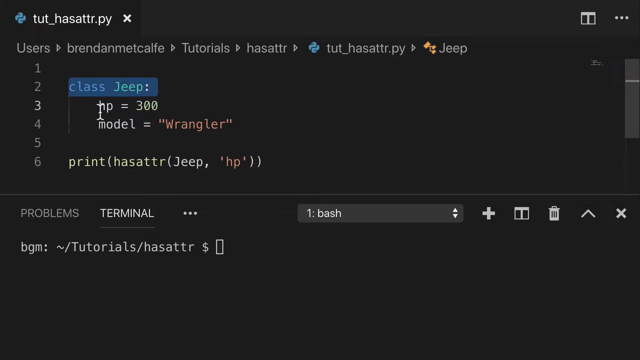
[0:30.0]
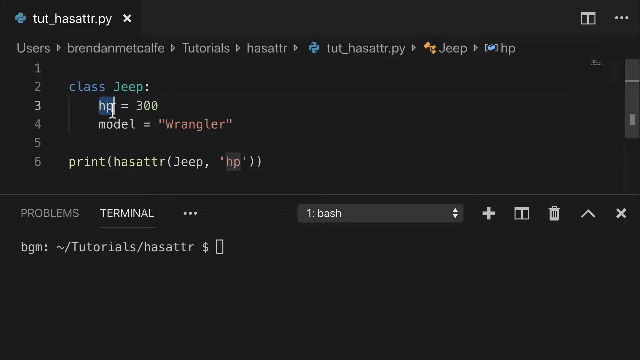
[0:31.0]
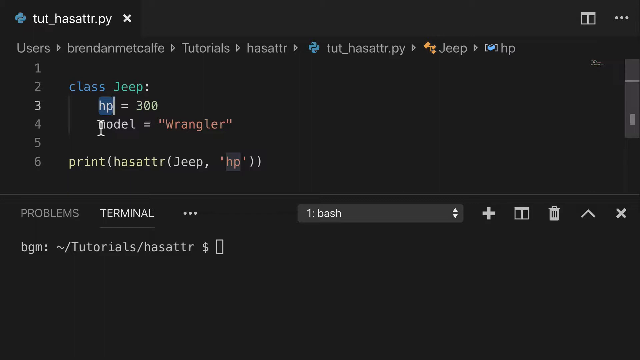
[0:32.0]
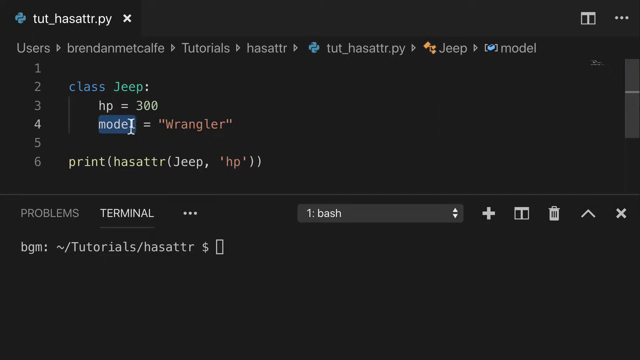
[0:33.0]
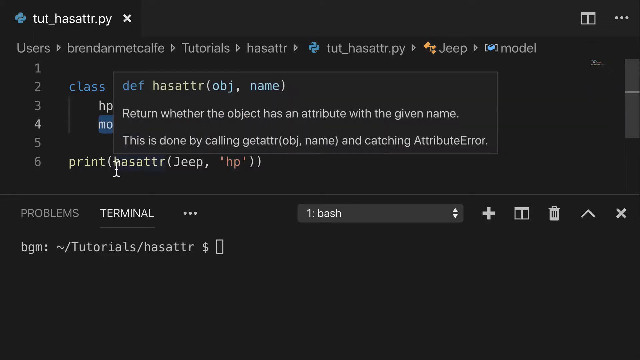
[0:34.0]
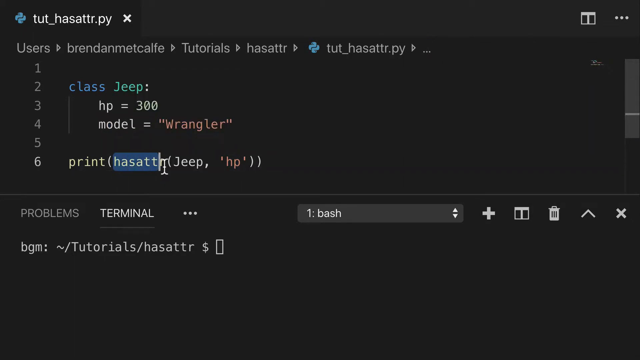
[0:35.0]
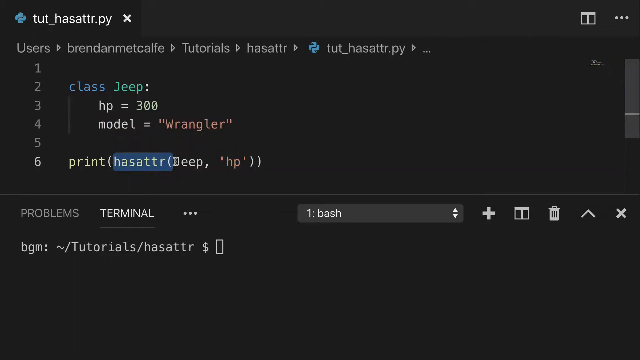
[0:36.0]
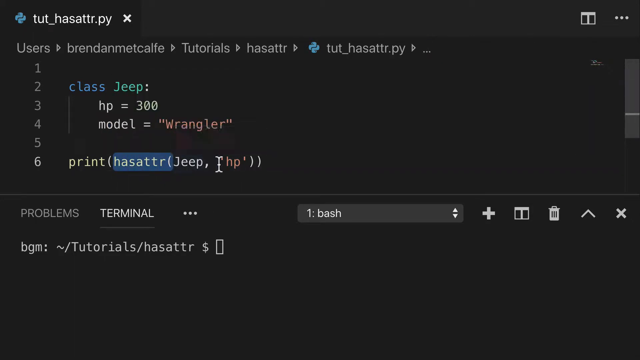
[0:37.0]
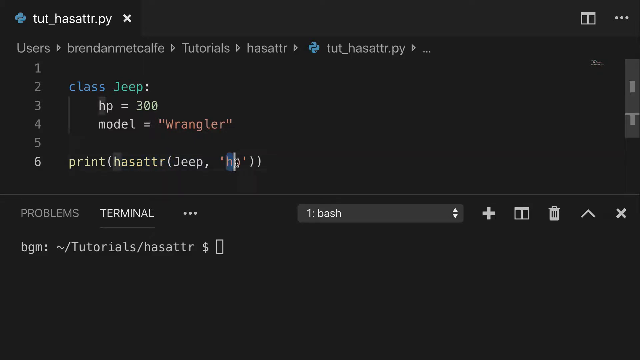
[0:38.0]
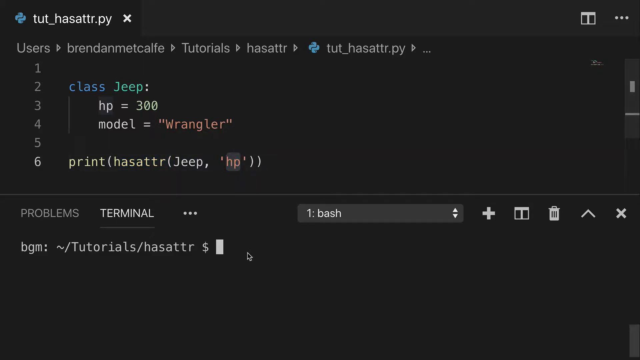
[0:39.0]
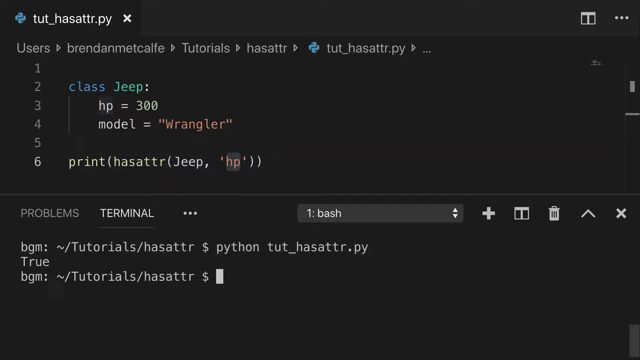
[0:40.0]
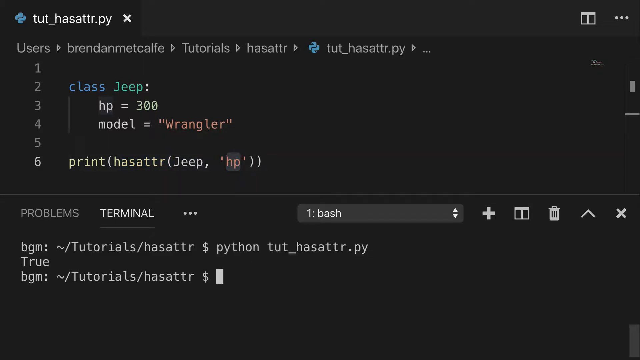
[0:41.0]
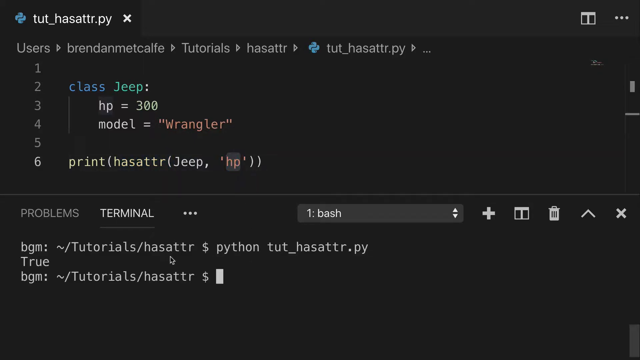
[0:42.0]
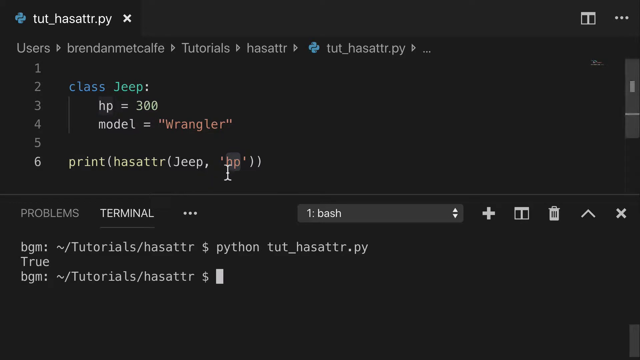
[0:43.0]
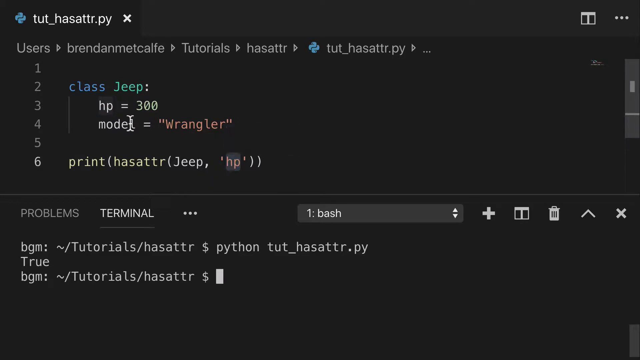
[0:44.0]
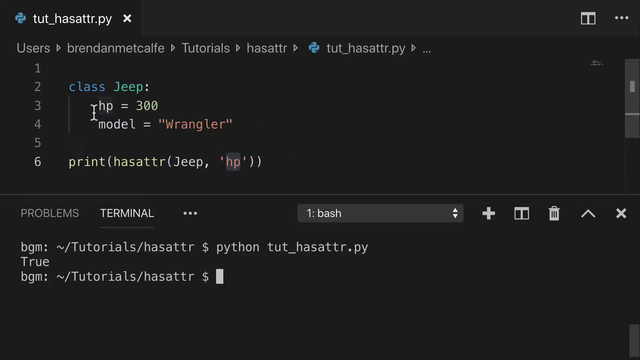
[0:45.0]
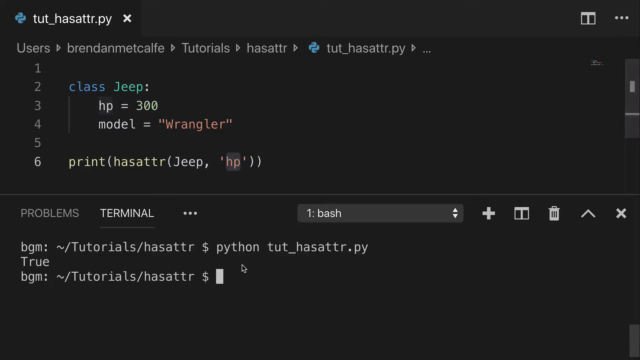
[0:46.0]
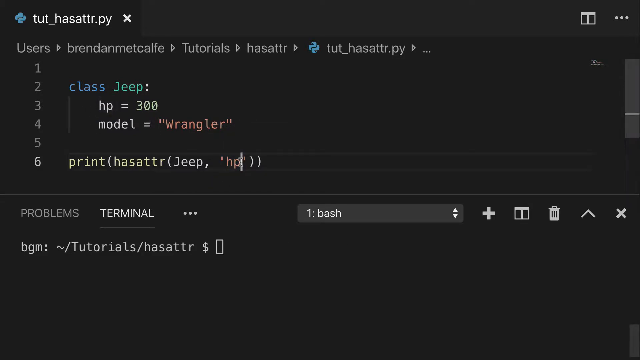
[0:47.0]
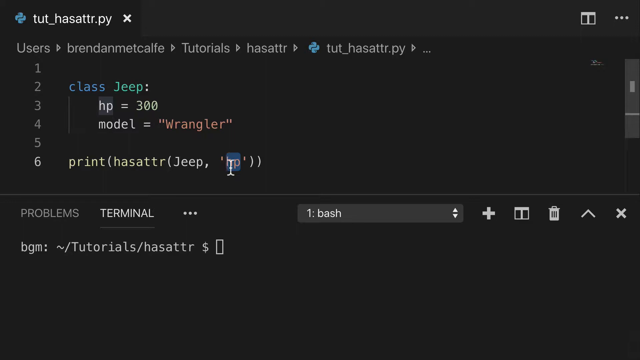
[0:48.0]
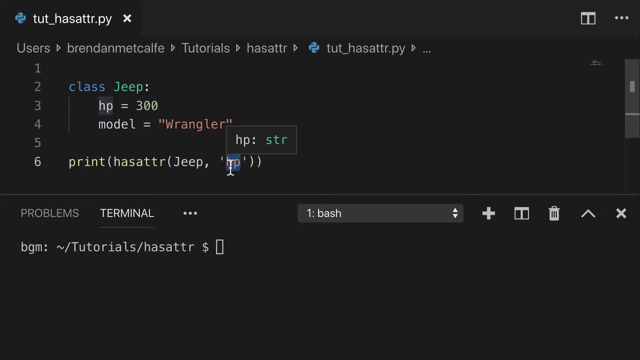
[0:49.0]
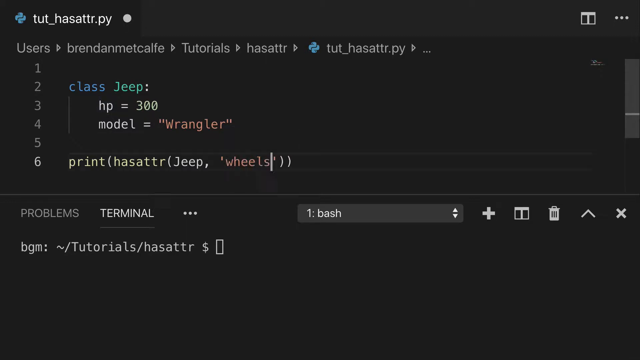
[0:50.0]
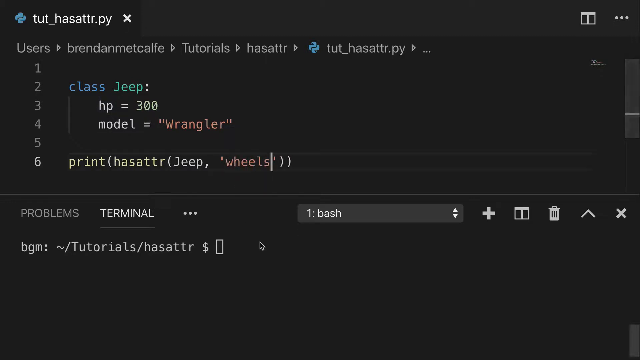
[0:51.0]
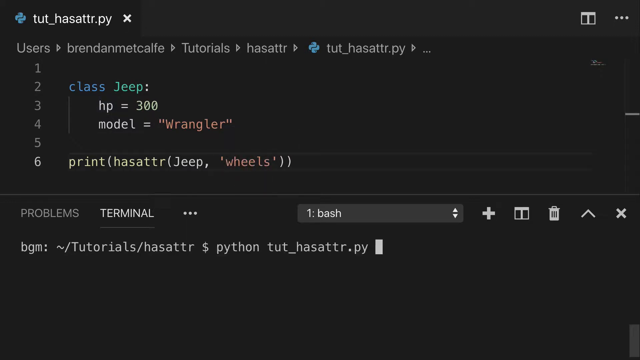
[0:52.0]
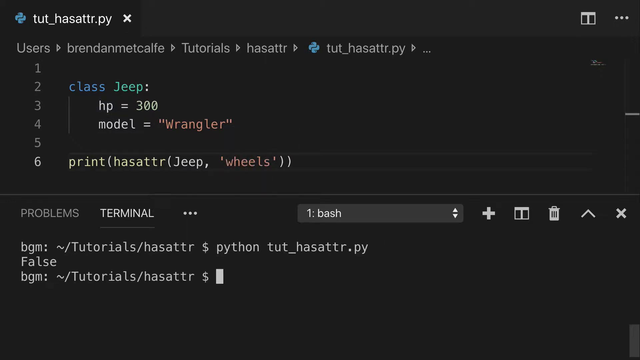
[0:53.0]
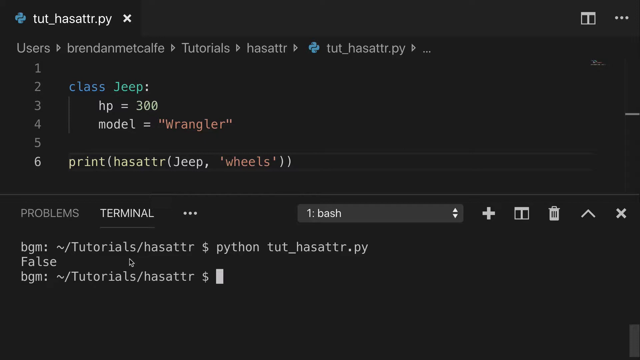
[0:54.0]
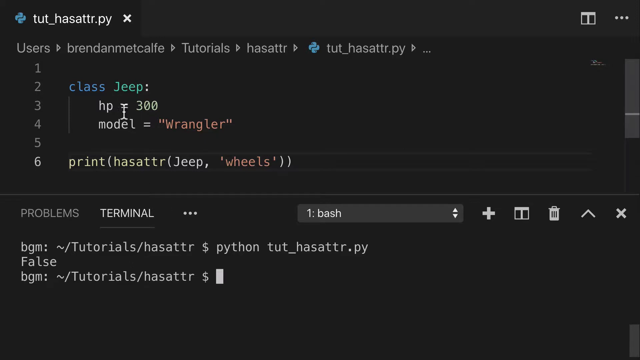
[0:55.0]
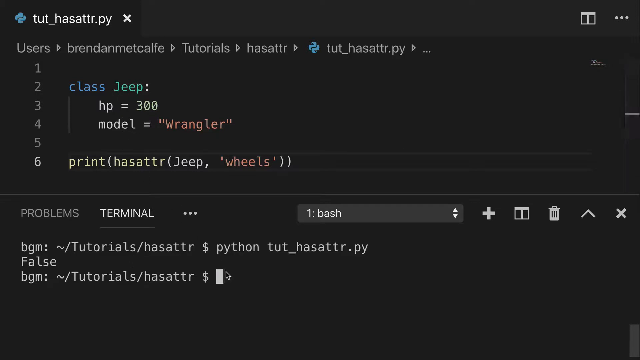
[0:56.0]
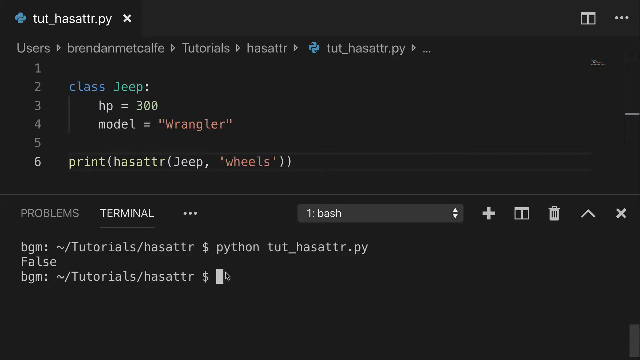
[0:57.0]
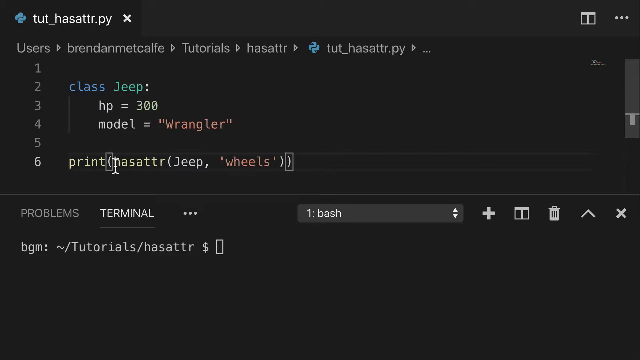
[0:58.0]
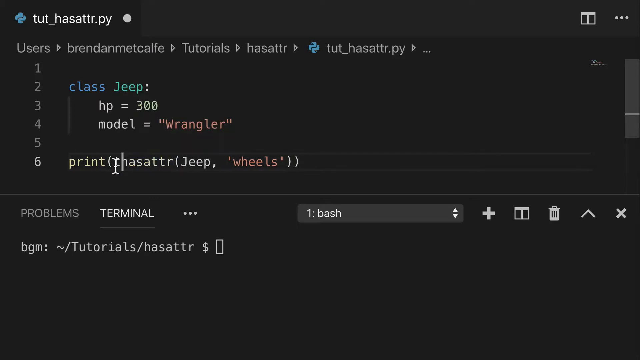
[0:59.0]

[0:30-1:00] A Python editor shows the file tut_hasattr.py. The code has 6 line numbers with 4 lines of code written, and a terminal is open below. "hp" on line 3 is selected, then "model" on line 4, then "hasattr" on line 6, and a dialog box opens at the top explaining this function. The mouse hovers over the code and then selects "hp" on line 6. In the terminal, the file's name is typed and the output is "true". Next, "hp" on line 6 is selected, deleted and replaced with "wheels". The file's name is typed in the terminal again and the code is run; the output is now "false". The mouse hovers between the terminal and the main code portion. On the sixth line, "type" is written after "print(".